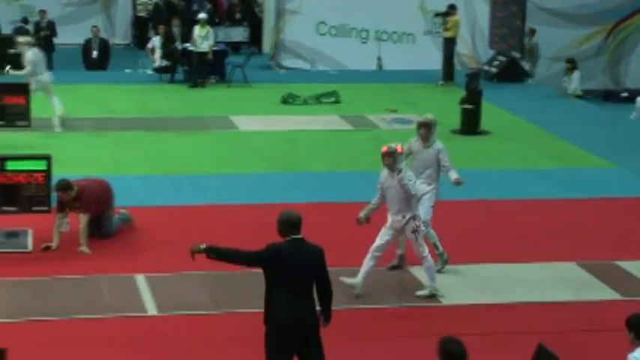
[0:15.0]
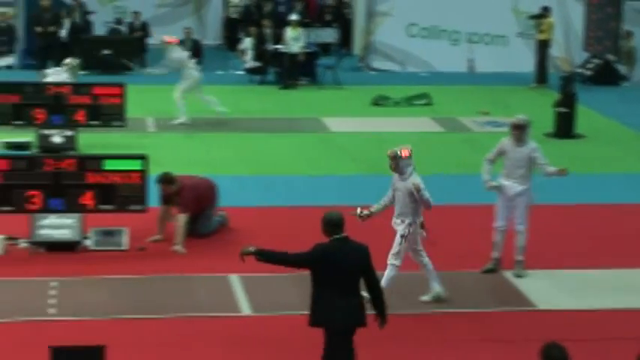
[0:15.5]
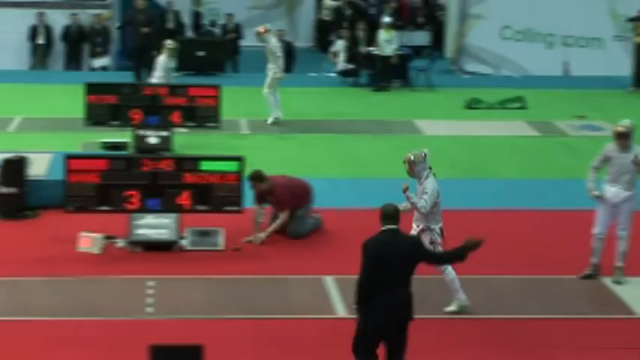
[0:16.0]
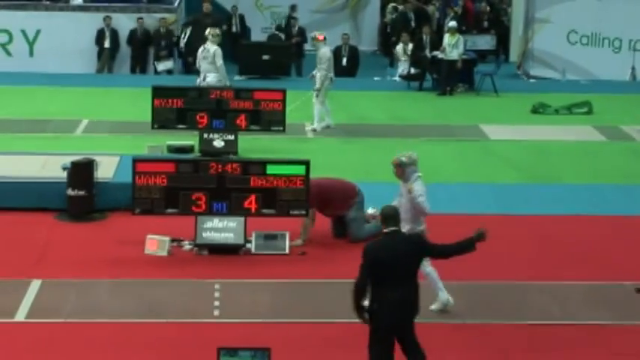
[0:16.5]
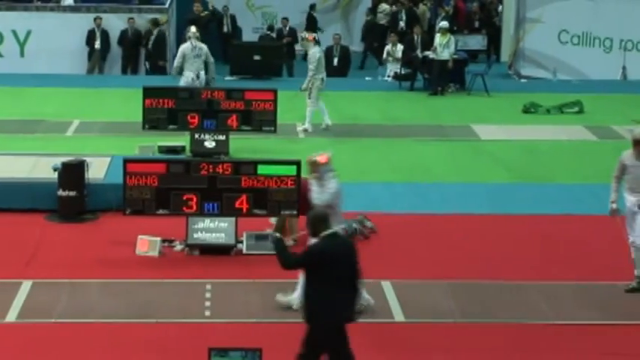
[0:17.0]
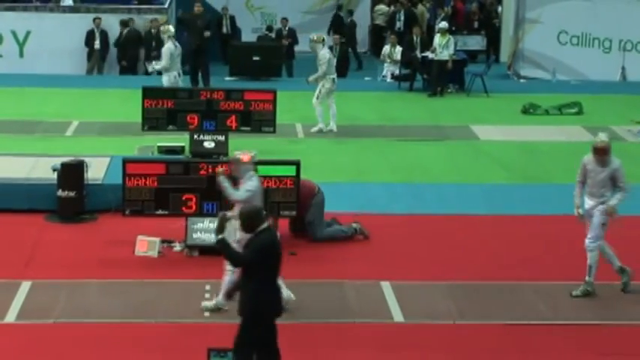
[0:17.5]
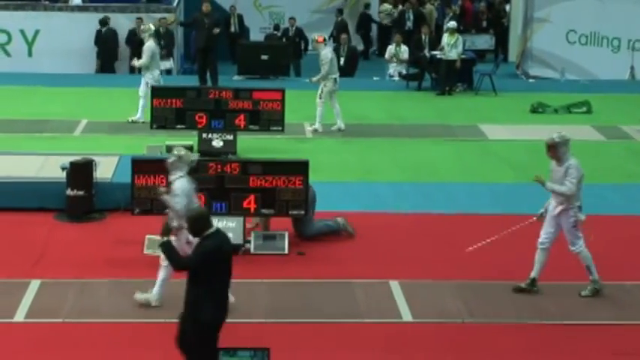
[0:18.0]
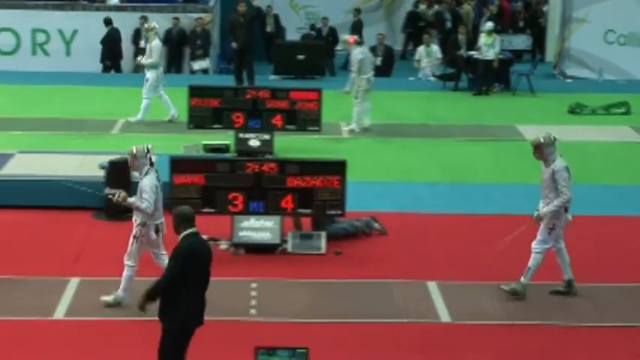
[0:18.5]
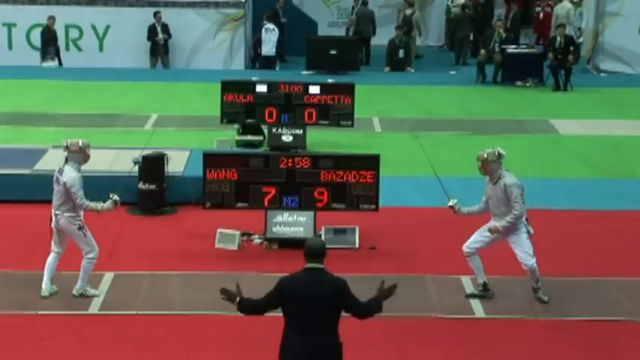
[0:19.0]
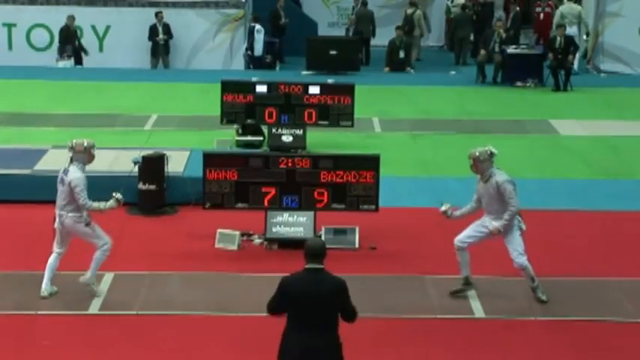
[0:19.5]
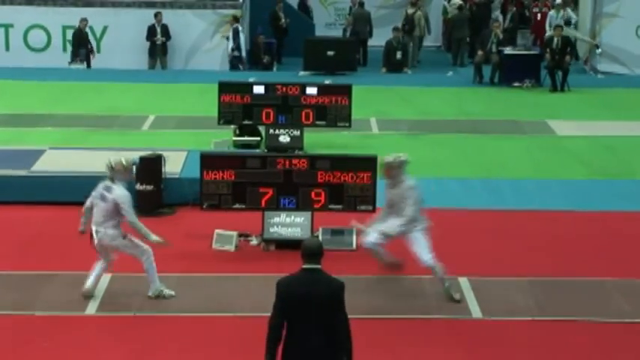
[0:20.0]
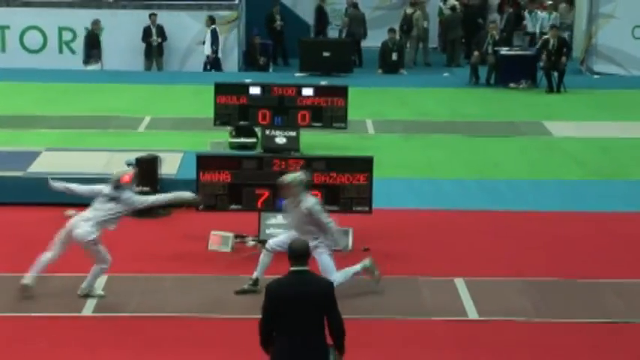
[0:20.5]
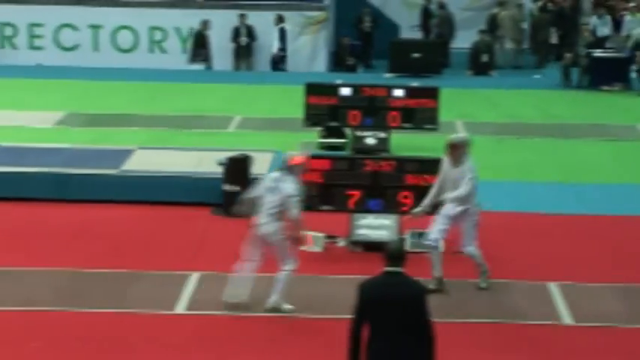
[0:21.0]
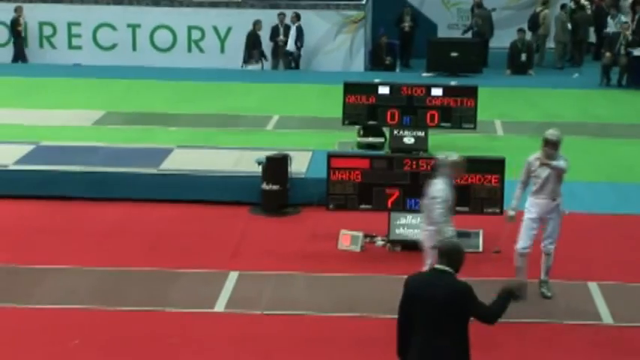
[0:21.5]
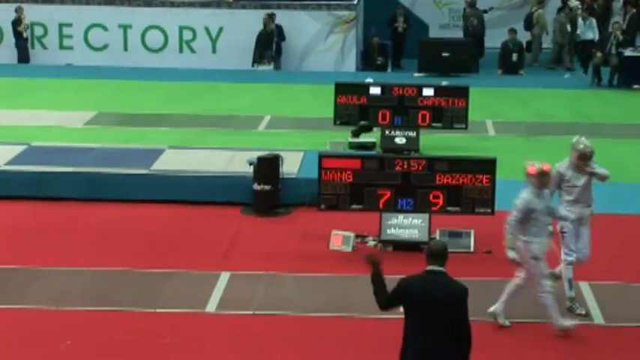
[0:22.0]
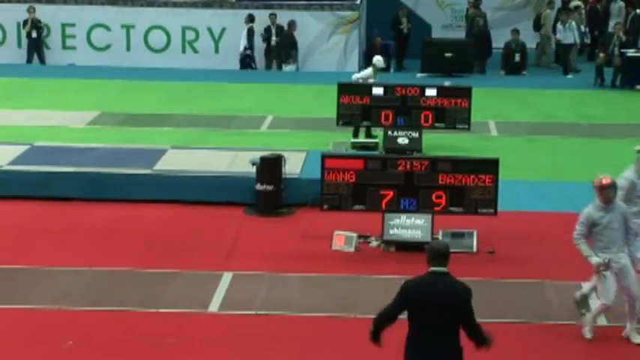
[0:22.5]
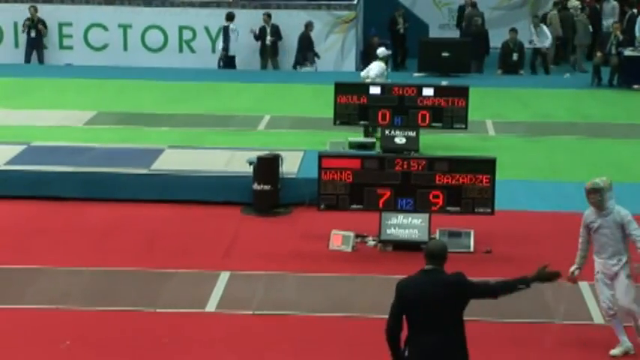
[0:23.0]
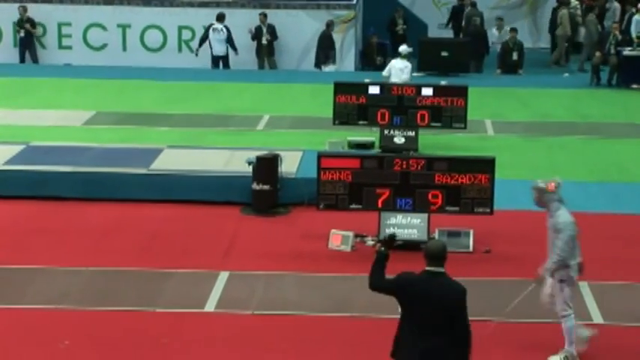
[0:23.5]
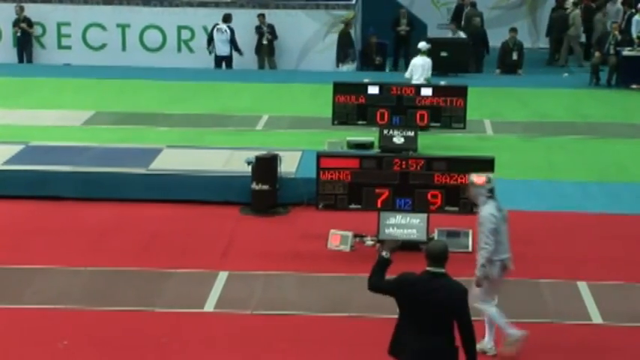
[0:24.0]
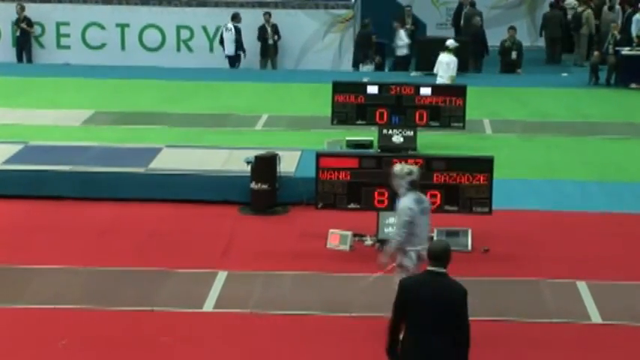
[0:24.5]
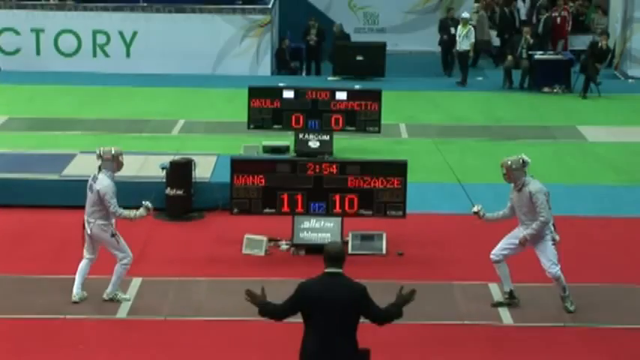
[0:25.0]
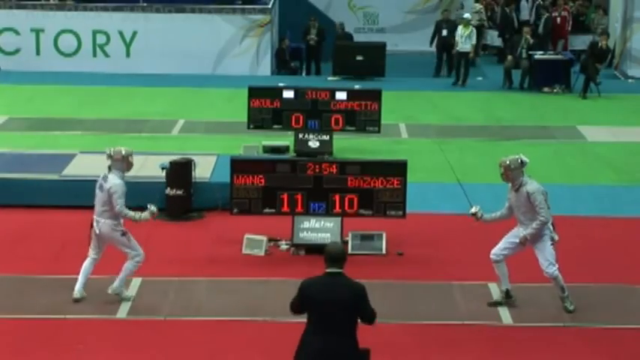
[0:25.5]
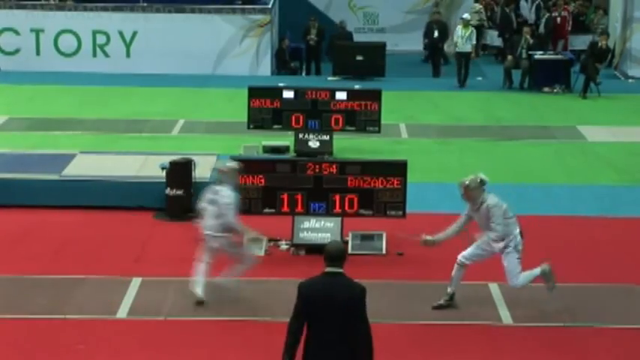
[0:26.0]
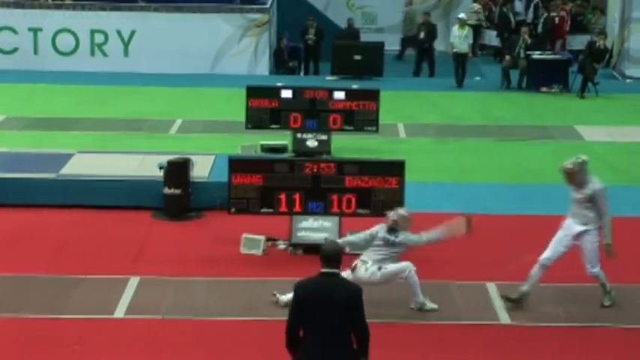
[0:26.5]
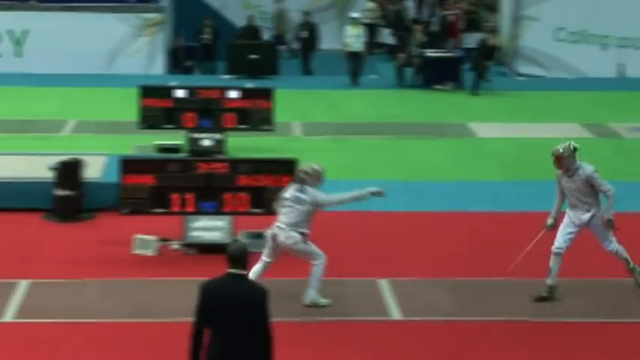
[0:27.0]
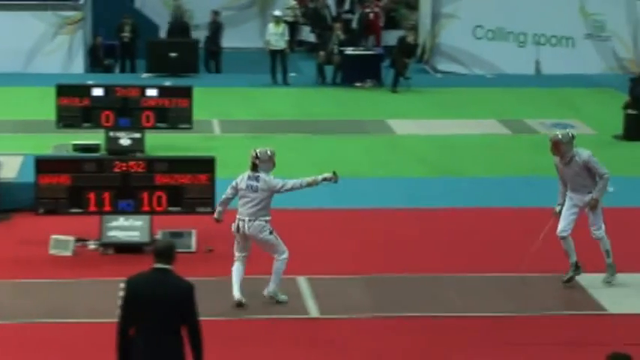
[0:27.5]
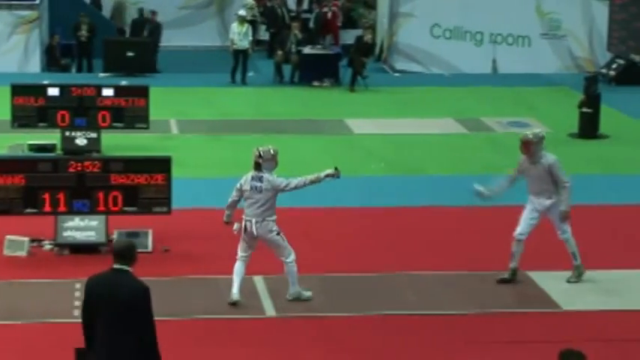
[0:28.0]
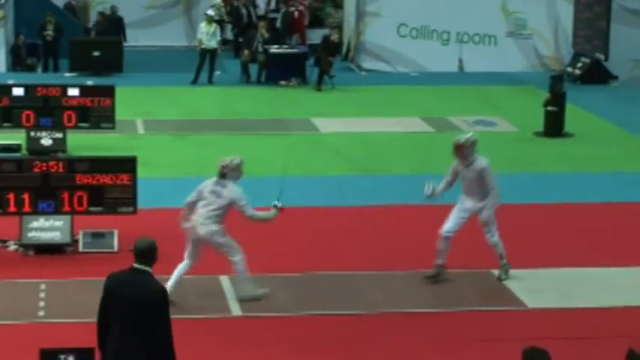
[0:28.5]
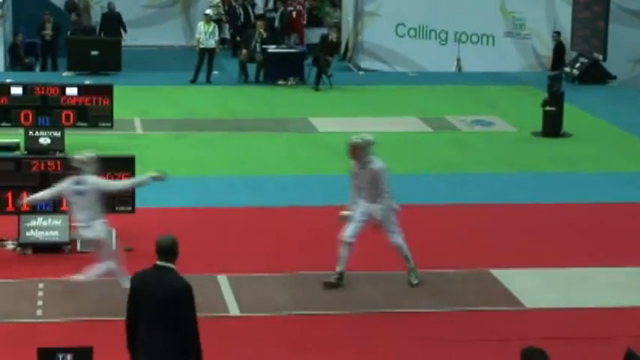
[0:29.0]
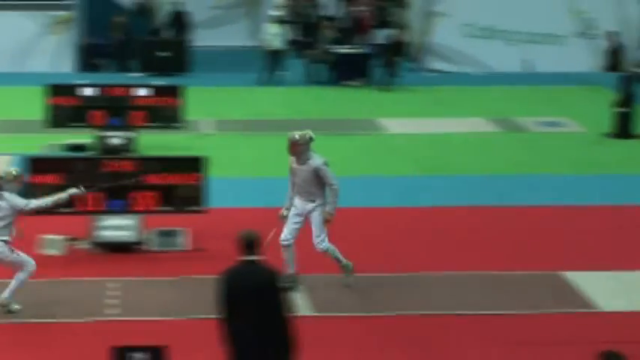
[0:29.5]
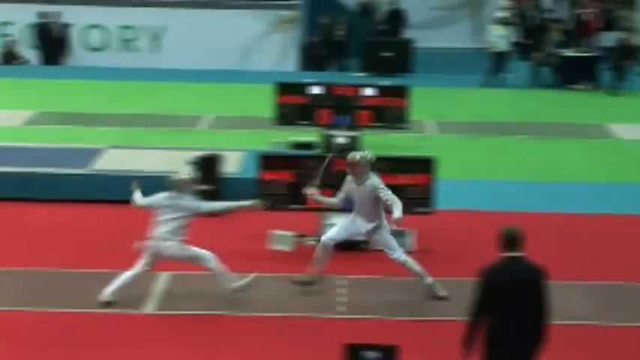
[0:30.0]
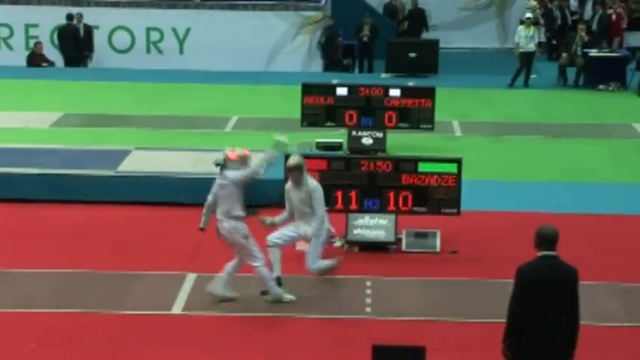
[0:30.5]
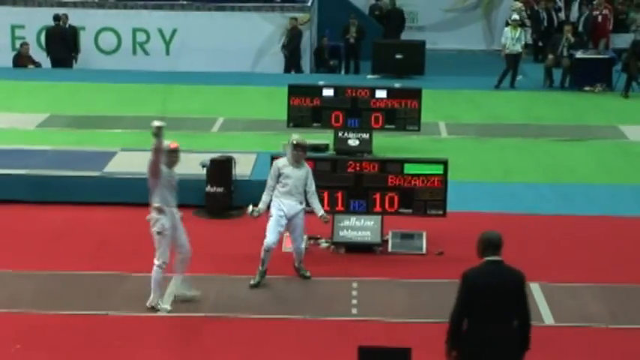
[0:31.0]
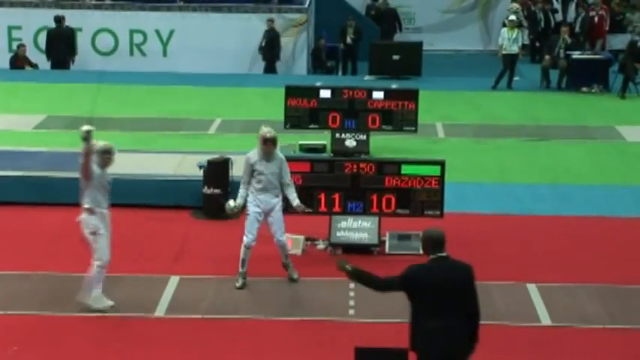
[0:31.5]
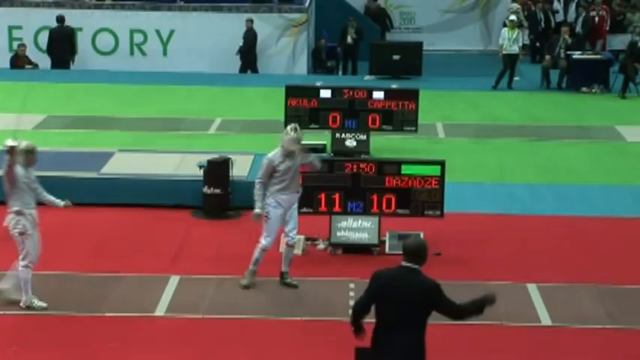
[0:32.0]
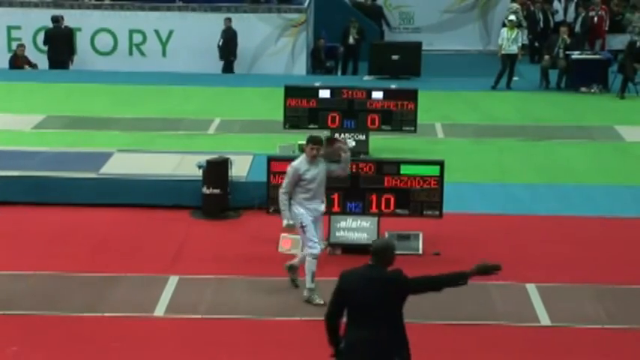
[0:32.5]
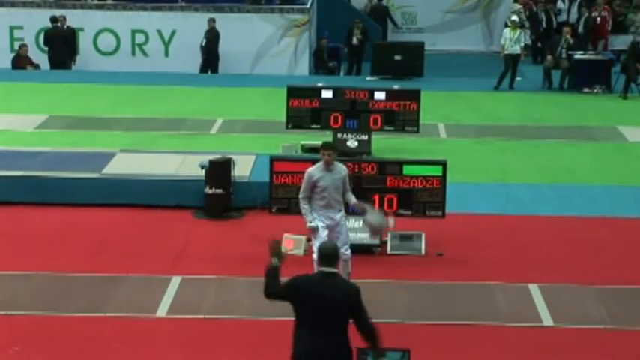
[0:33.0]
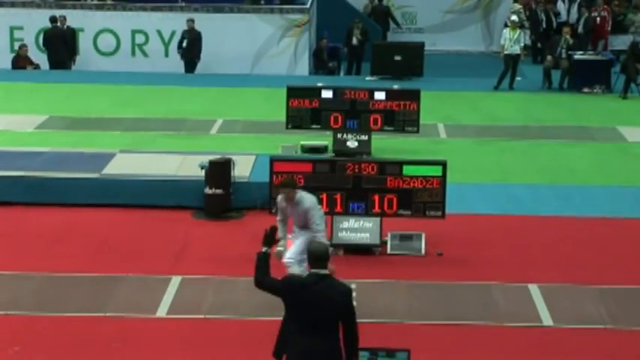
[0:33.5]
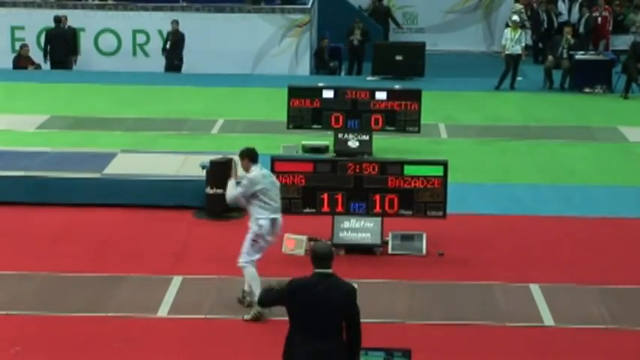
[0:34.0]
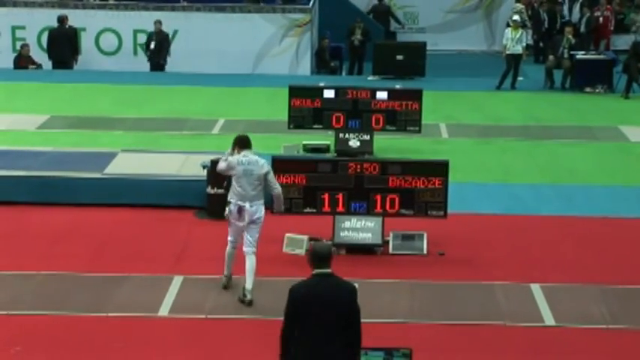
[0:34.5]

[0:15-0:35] Two male fencers, who look to be Bazadze and Wang, compete in a fencing tournament. At first the match is tied 4 to 4. A later section of the match shows Wang 7, Bazadze 9, and Wang then scores a point. The video cuts again to a different portion of the match, where it is Wang 11, Bazadze 10. Bazadze then scores another point, tying the match once again. The two fencers appear to be fairly evenly matched, and the match looks very dynamic, with lots of movement back and forth between them.